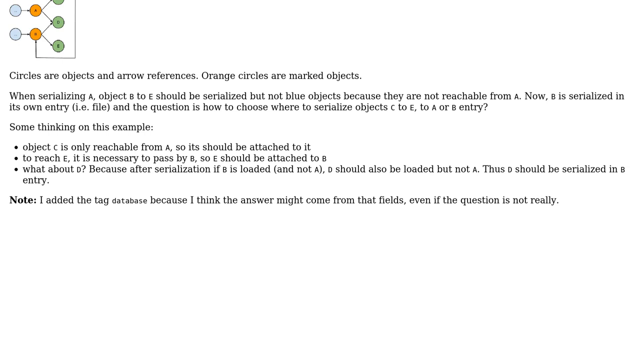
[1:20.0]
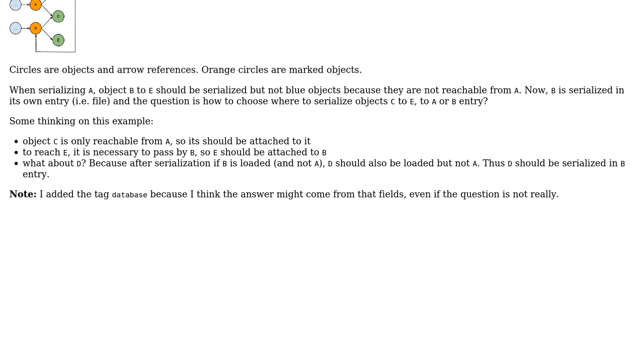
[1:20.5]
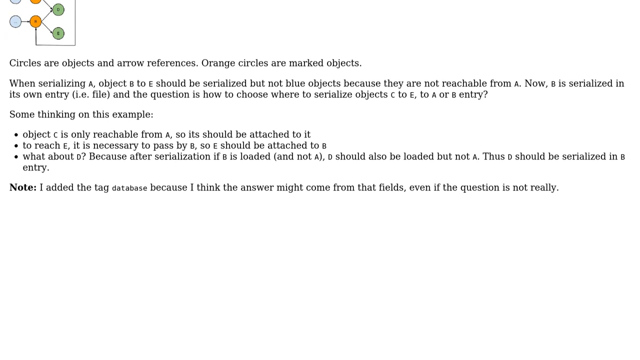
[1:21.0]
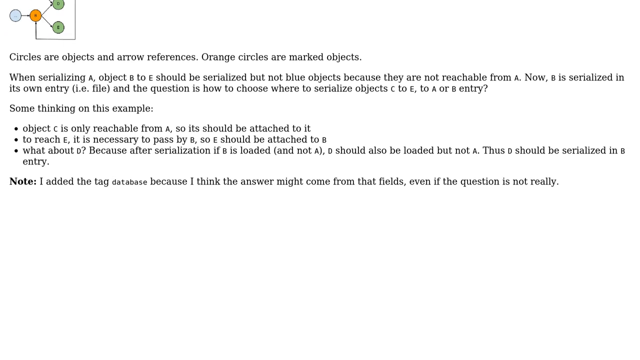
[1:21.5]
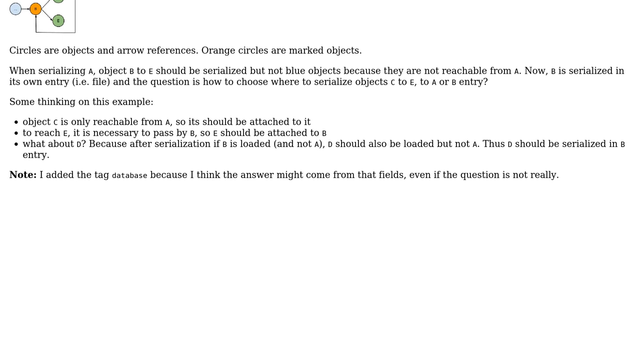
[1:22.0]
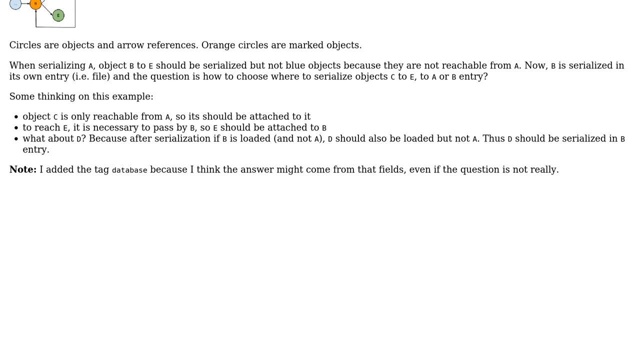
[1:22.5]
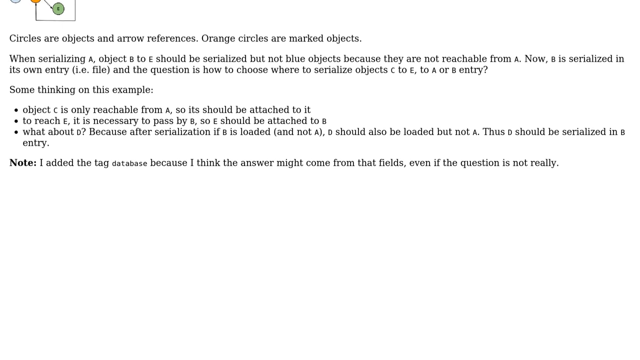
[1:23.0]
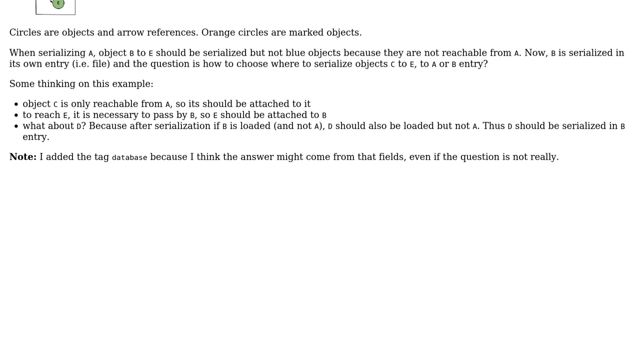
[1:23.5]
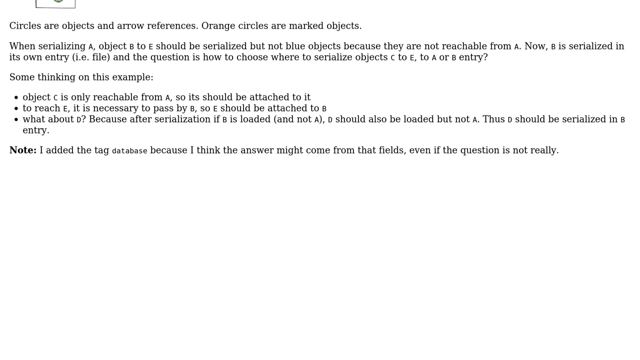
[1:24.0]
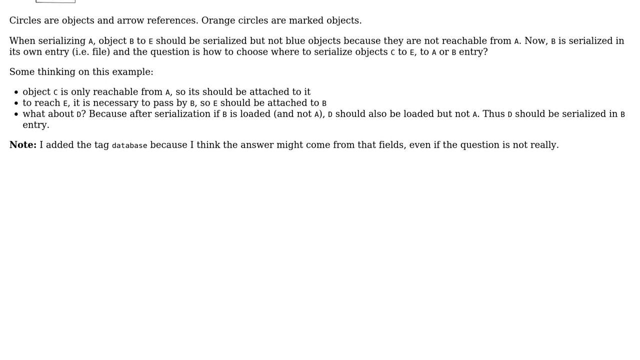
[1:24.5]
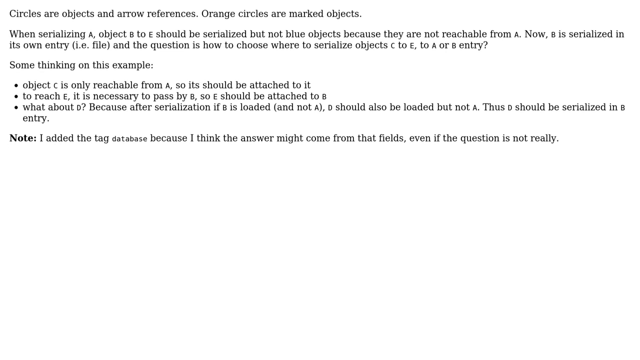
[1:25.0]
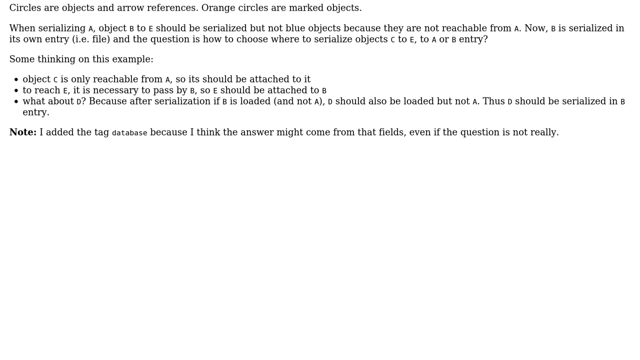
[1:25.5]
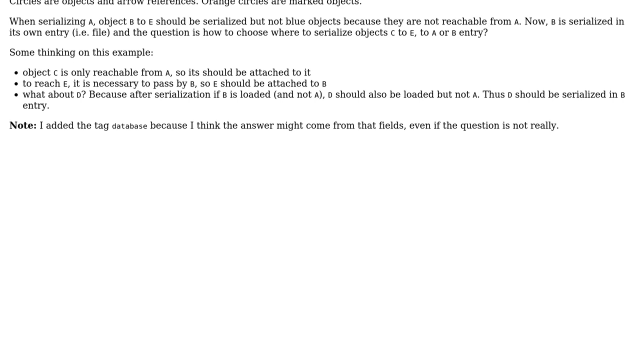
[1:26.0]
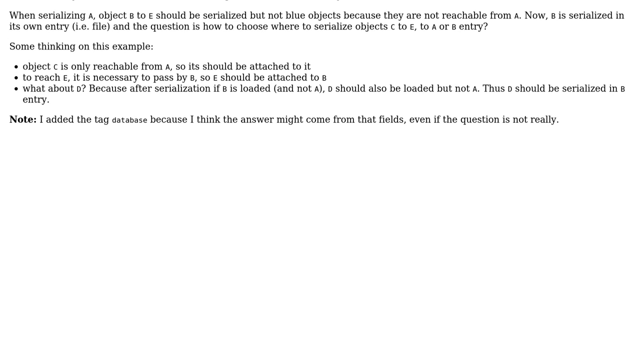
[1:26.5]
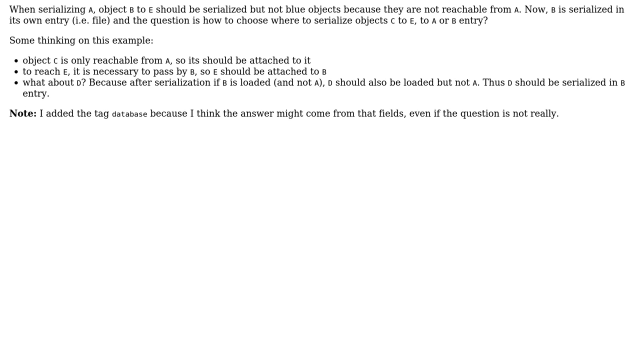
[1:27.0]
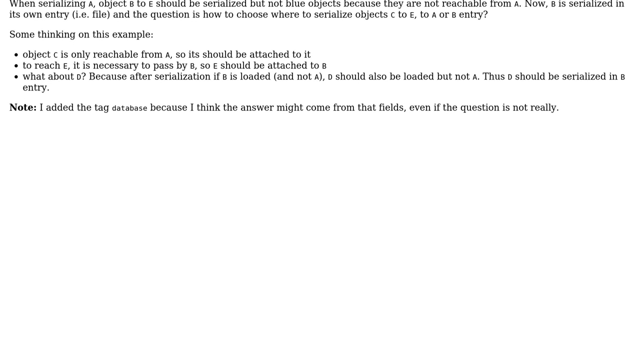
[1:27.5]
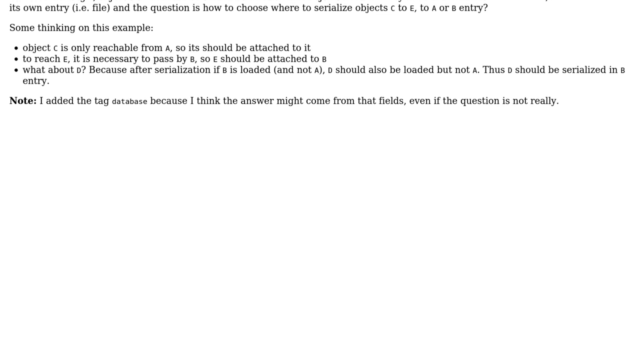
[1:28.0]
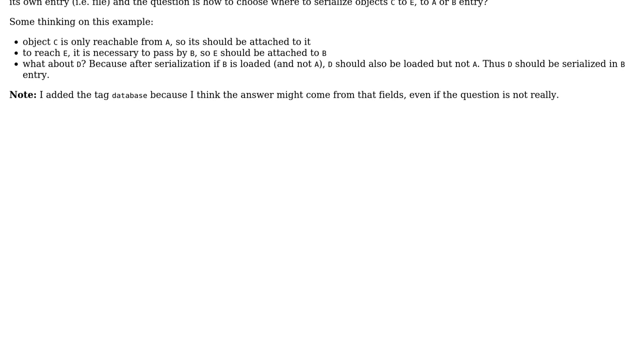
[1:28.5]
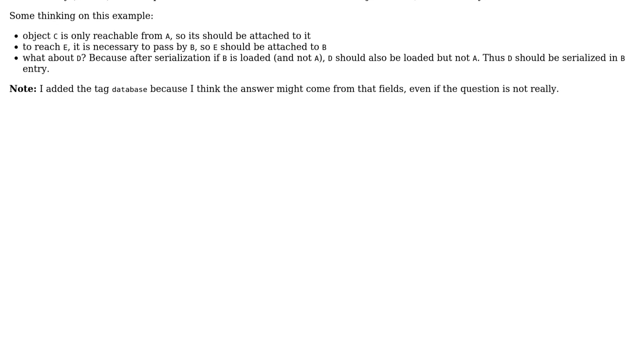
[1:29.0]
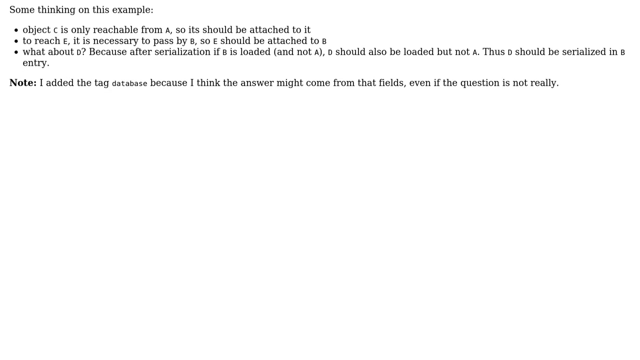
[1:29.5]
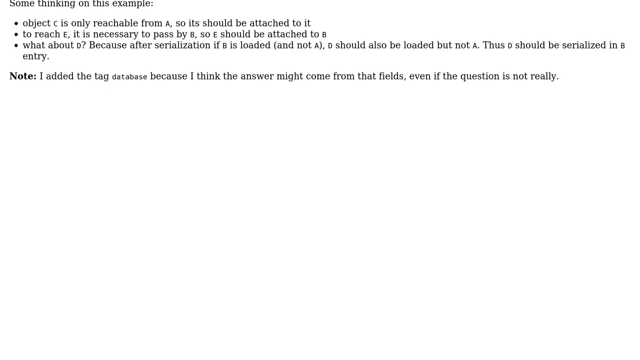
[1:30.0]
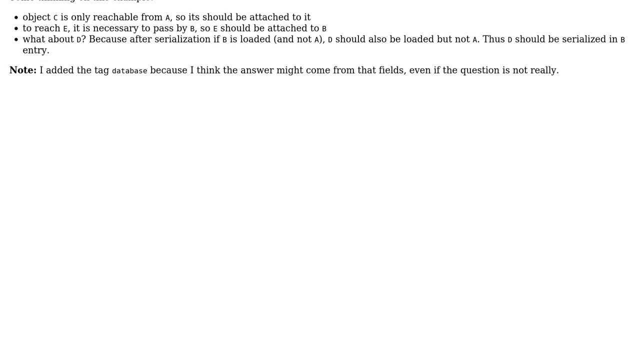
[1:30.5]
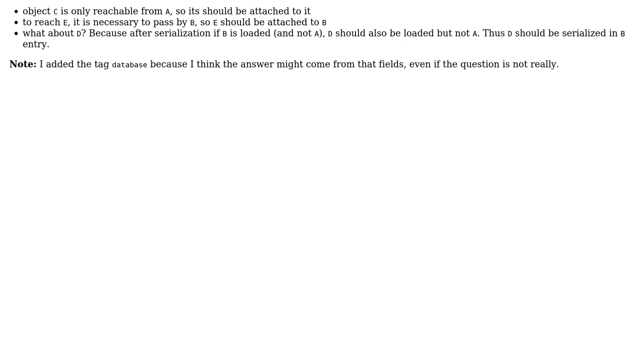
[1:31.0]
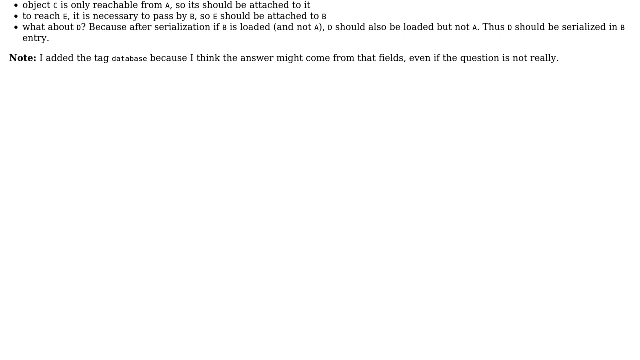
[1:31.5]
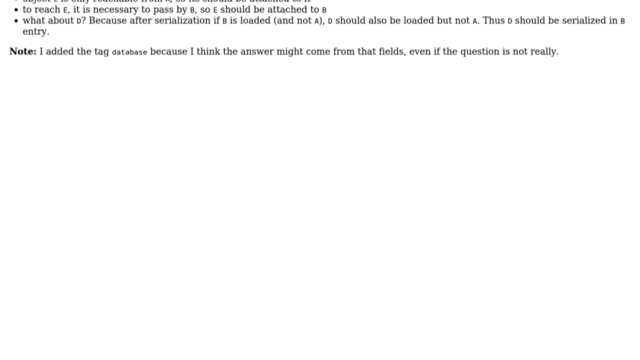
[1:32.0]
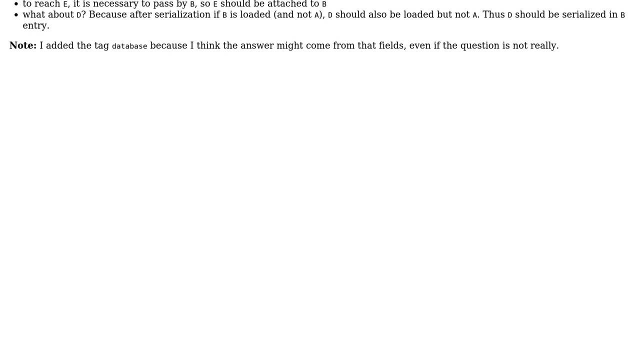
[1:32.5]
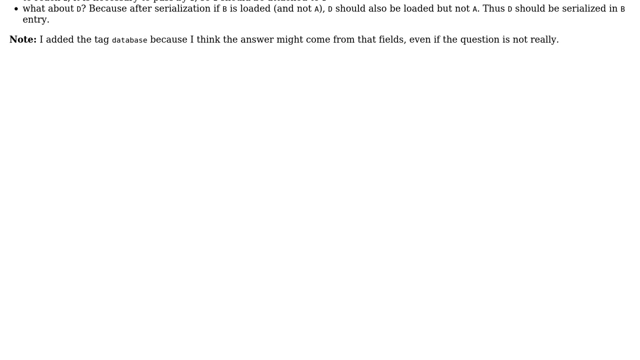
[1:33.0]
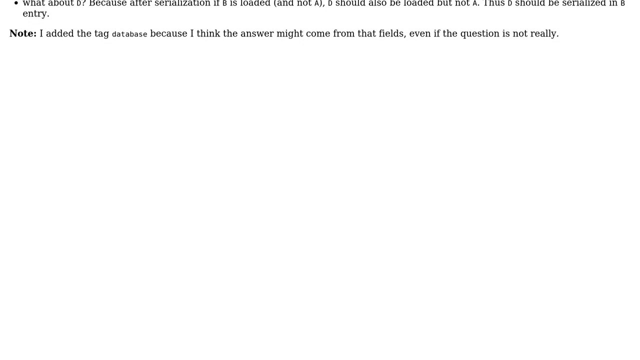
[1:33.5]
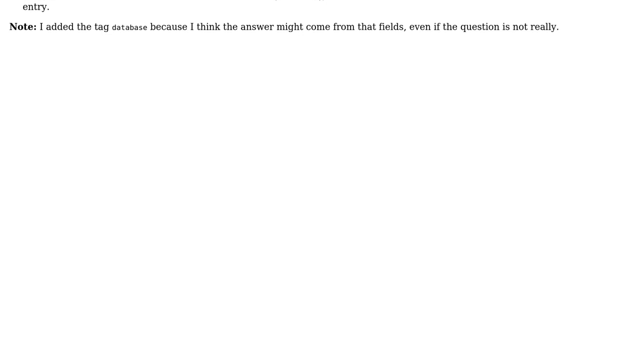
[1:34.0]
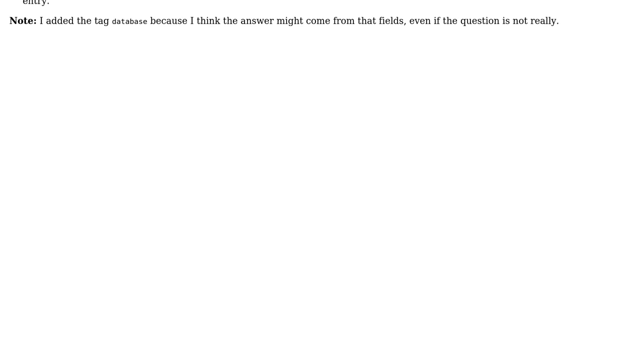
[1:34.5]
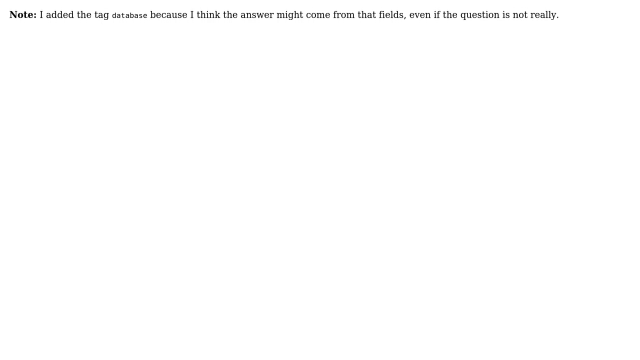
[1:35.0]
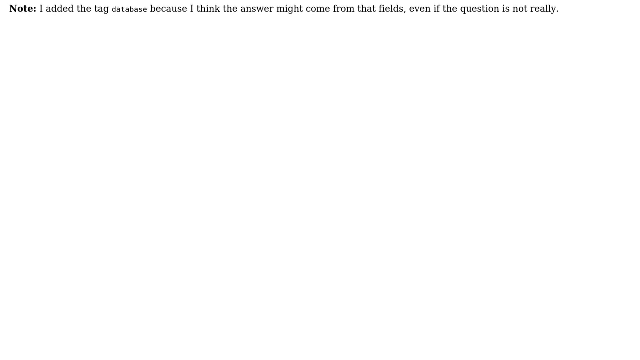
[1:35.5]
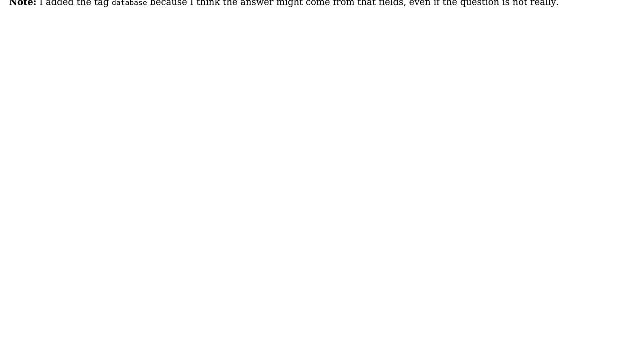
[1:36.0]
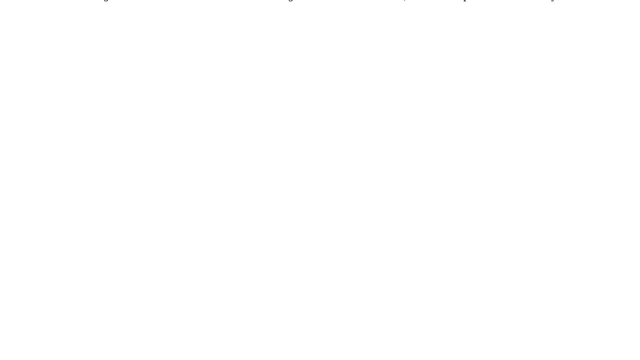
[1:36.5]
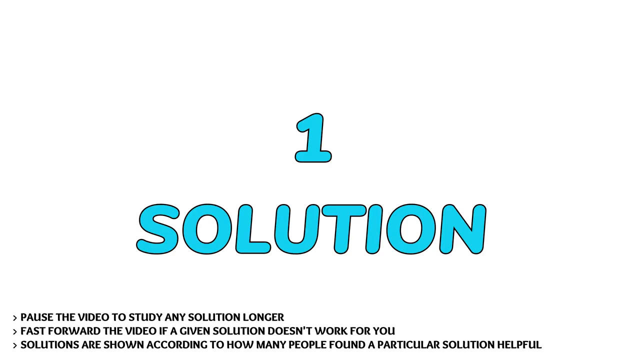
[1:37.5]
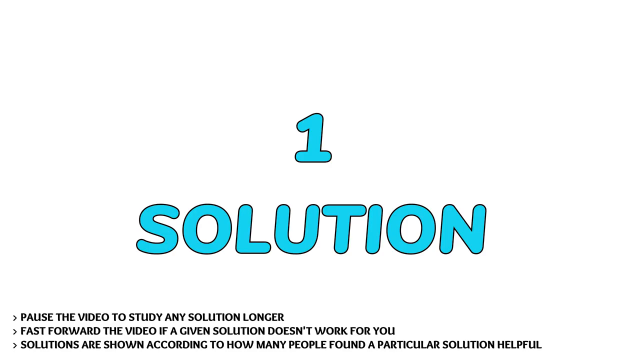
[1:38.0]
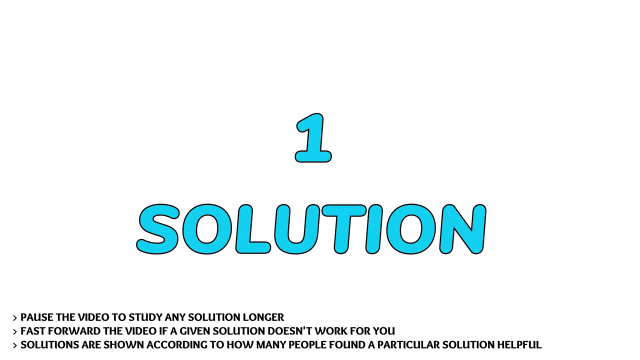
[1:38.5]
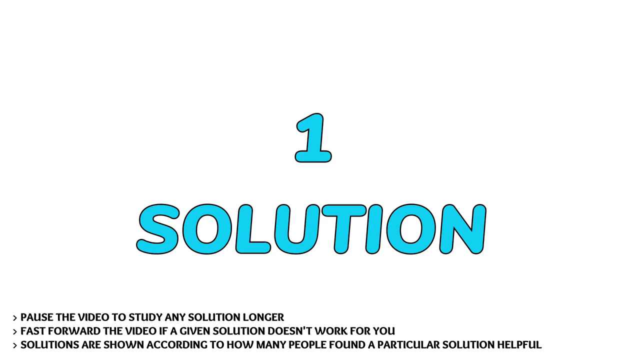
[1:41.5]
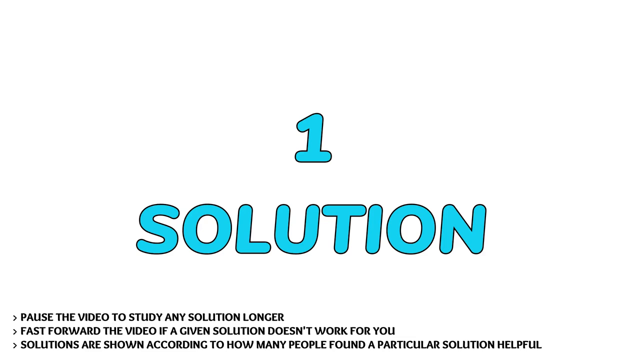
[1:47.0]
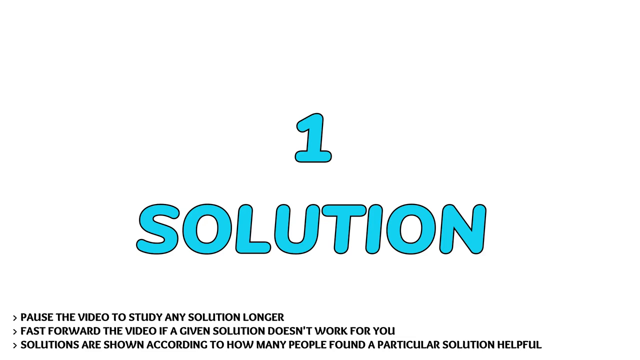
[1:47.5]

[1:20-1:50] The remaining text scrolls slowly up until the page becomes completely blank. The scene then changes to a screen that says "one solution," with the number one and the word "solution" in blue capital letters outlined in black. Three points at the very bottom read "pause the video to study any solution longer," "fast forward the video if a given solution doesn't work for you," and "solutions are shown according to how many people found a particular solution helpful." The video pauses on this still screen.